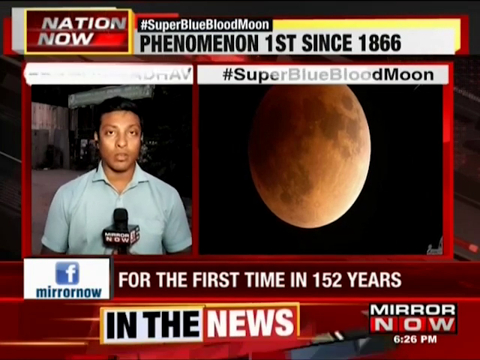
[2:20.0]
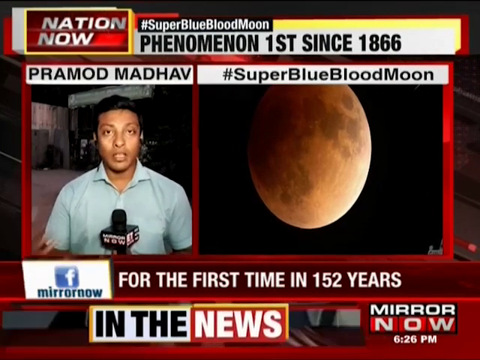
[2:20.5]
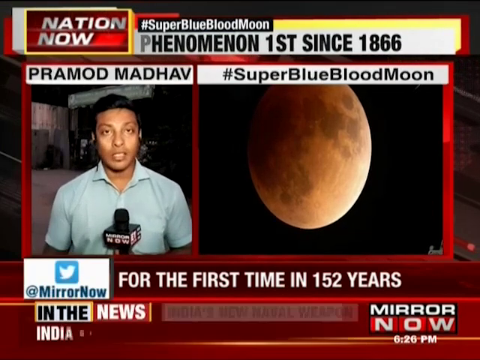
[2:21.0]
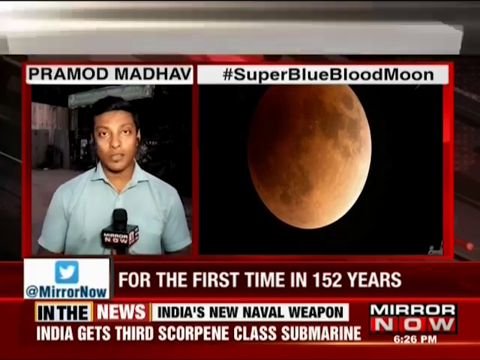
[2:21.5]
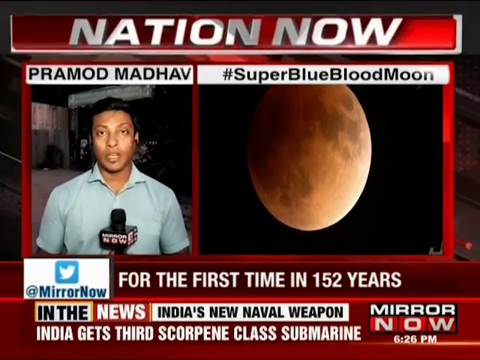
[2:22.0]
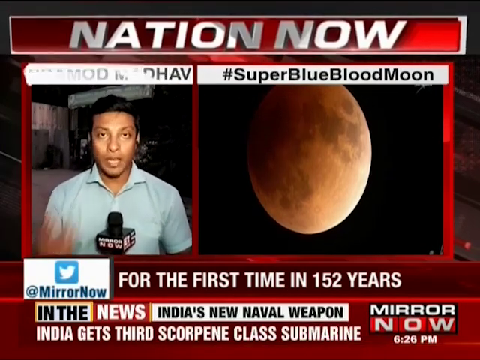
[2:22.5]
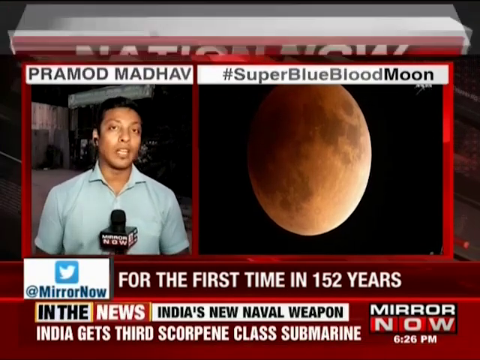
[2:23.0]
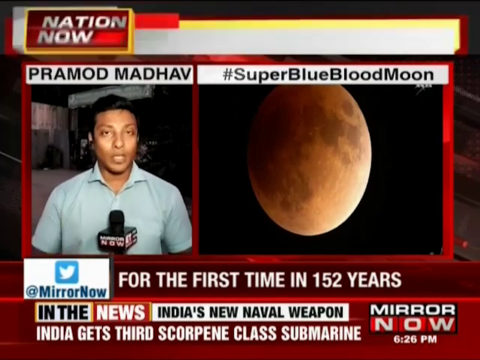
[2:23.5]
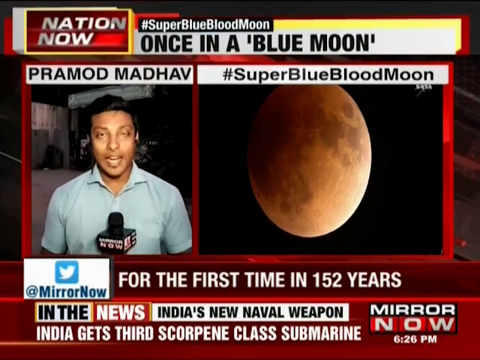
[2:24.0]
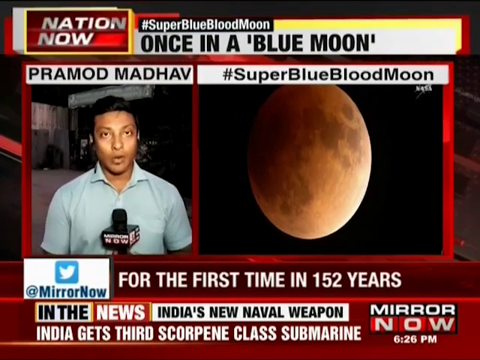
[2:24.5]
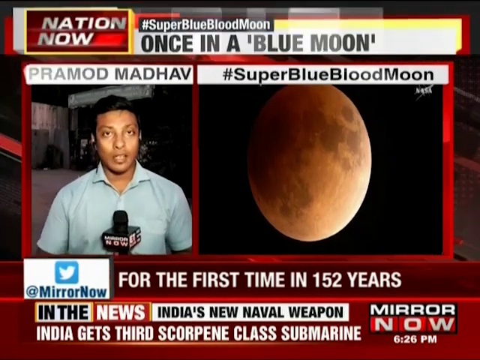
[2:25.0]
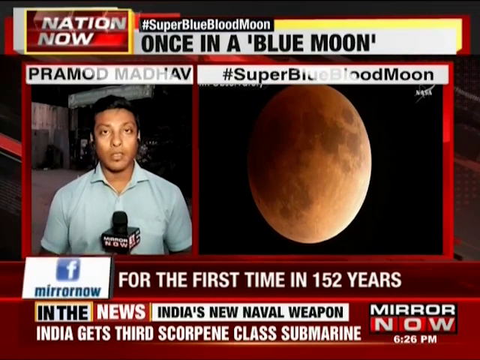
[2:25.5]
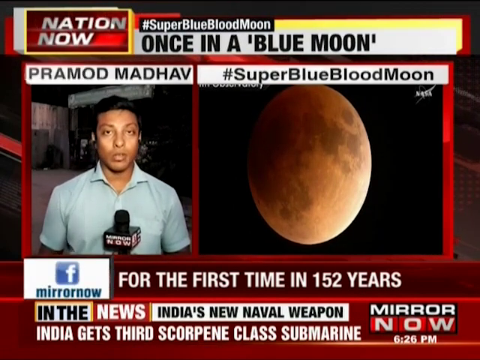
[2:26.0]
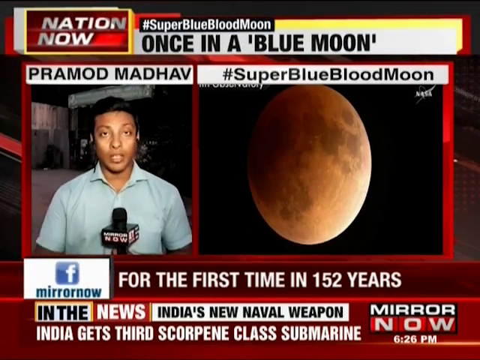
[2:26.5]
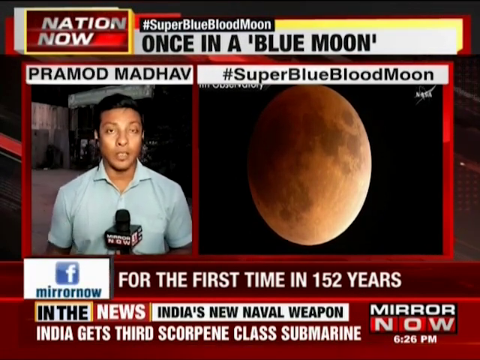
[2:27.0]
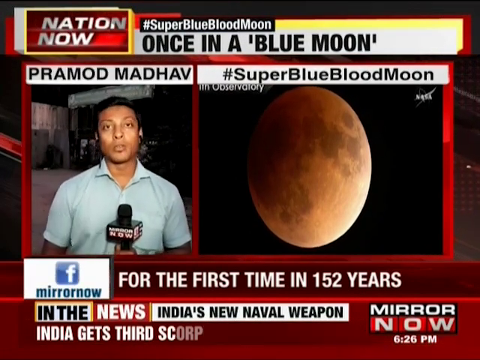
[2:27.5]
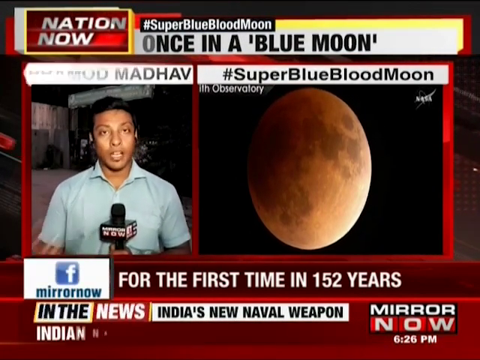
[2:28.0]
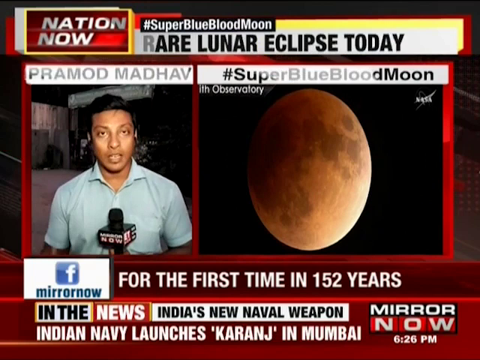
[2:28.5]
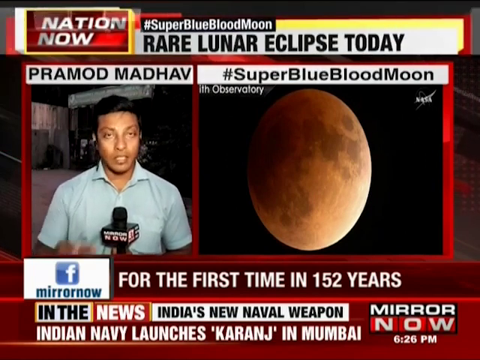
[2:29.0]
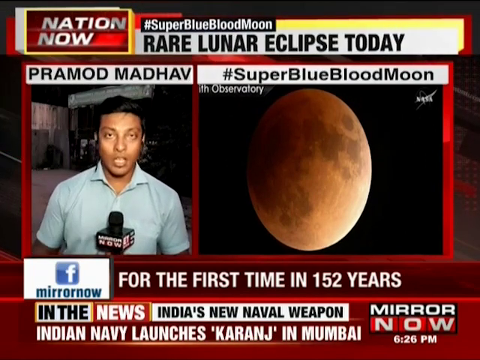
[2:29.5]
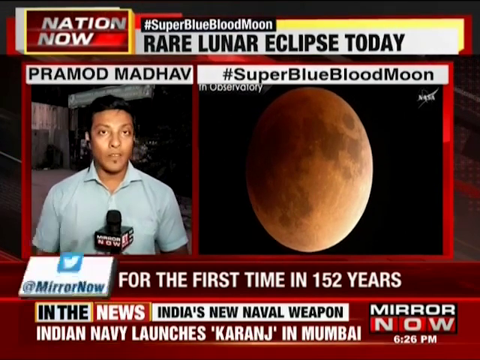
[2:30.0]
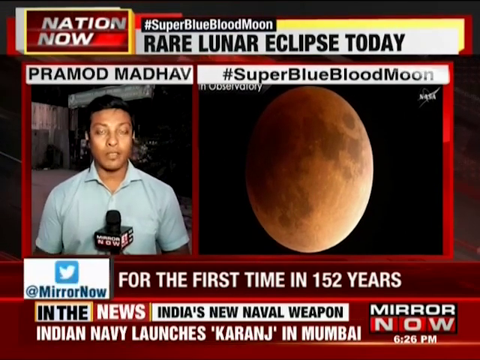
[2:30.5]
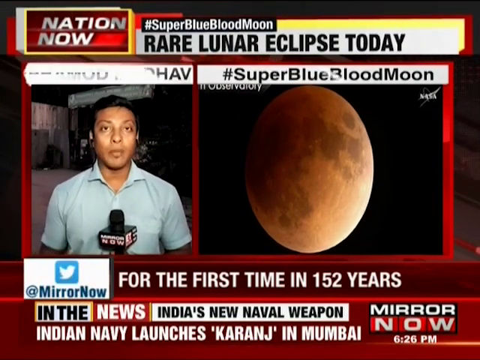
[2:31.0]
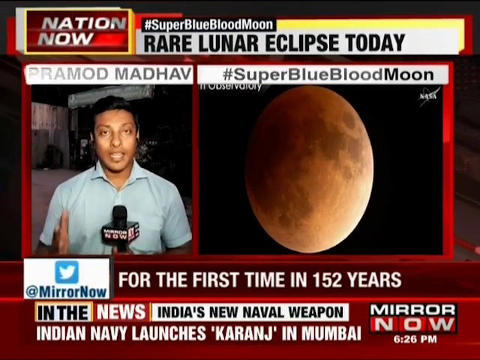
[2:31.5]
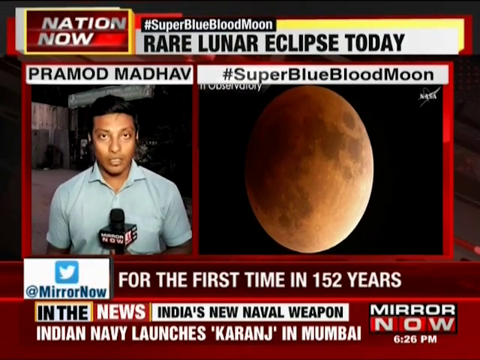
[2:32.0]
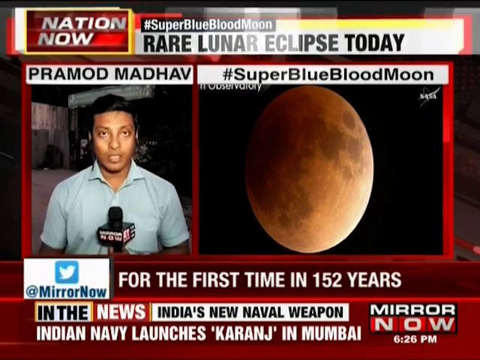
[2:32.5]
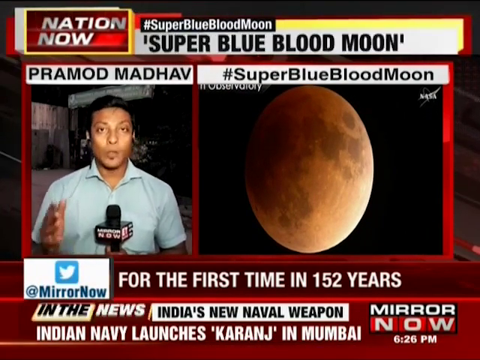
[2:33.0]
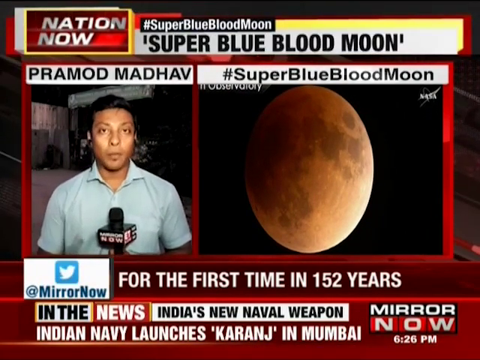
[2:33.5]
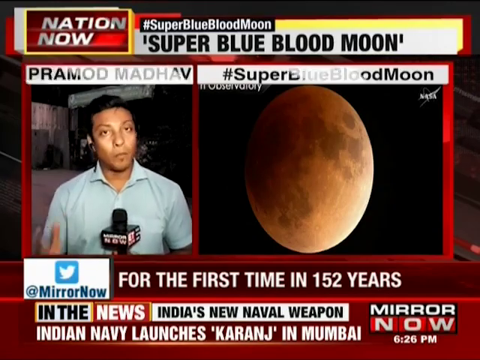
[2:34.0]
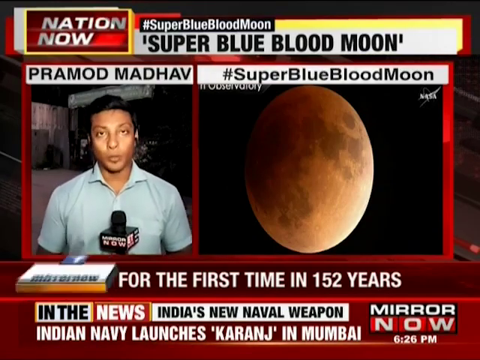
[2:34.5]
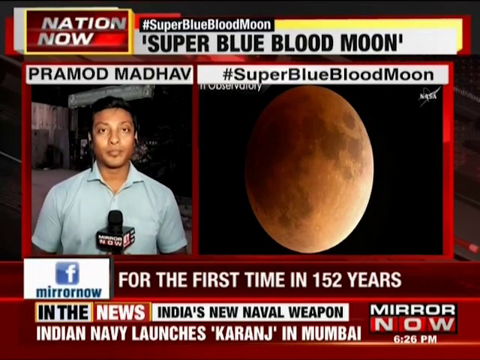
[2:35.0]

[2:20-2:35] The man, Pramod Madan, is talking, maybe about the moon. The super blue black moon is seen for the first time in 152 years. The moon is shown live; its color seems to be a lighter red and the background is fully black. It is a live telecast with a lot of information on screen. After that, a woman appears who seems very curious, energetic and happy, talking about the super blue black moon.